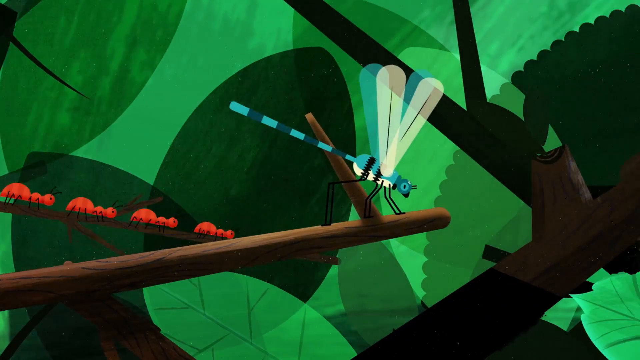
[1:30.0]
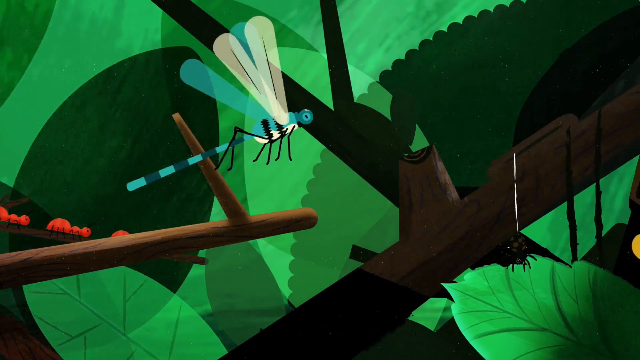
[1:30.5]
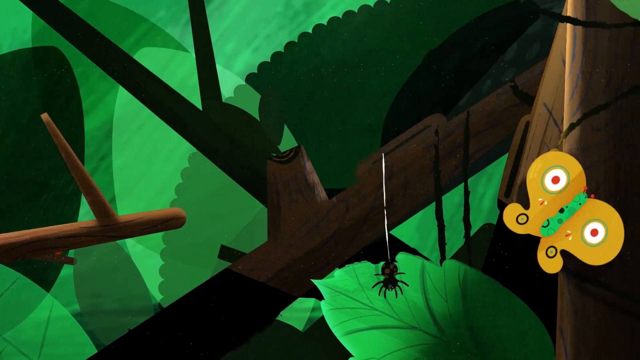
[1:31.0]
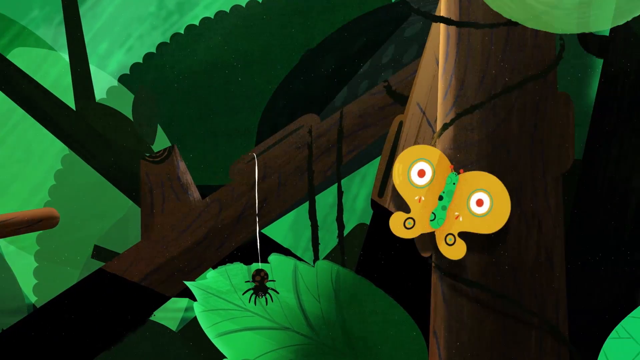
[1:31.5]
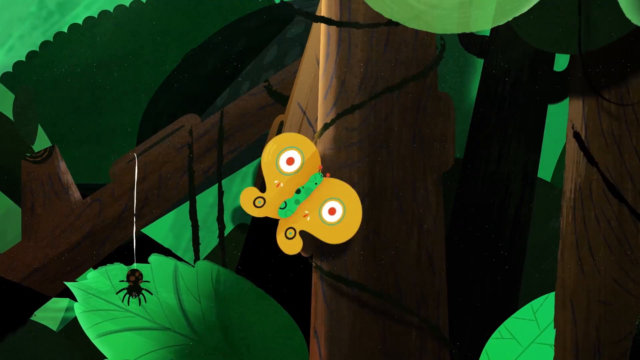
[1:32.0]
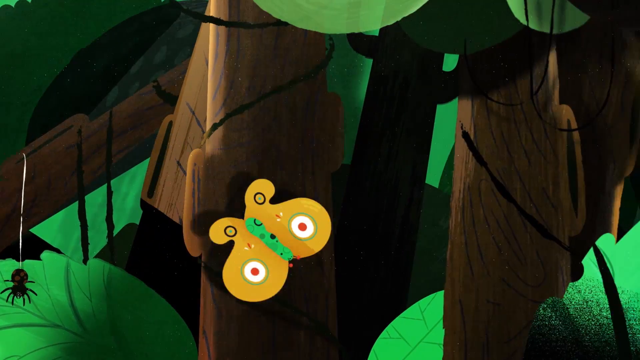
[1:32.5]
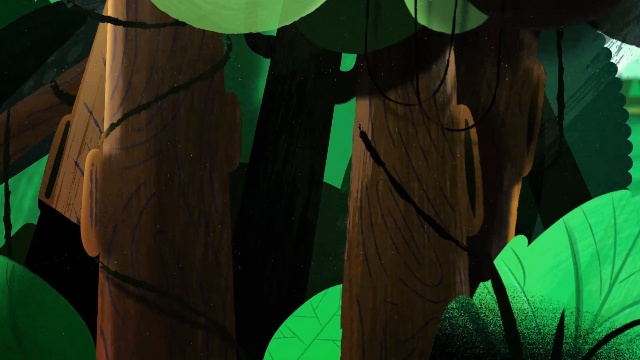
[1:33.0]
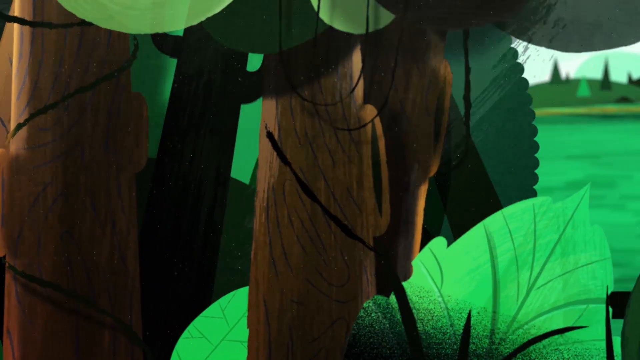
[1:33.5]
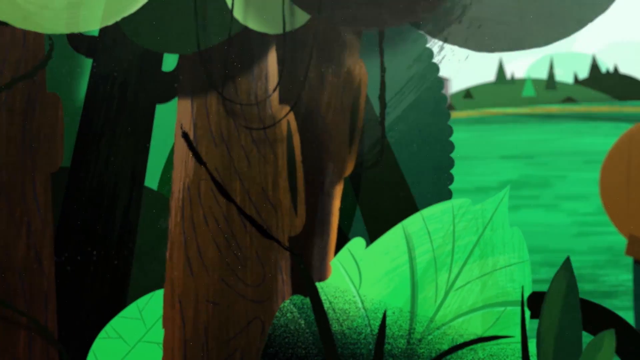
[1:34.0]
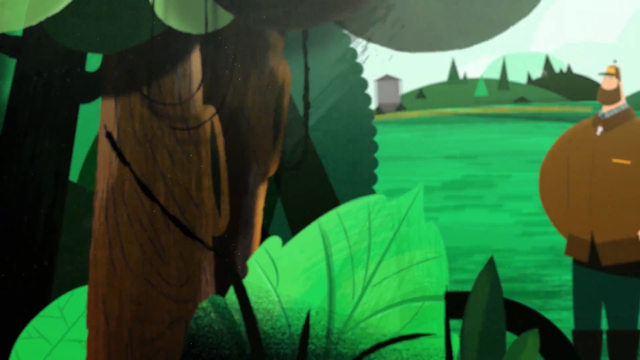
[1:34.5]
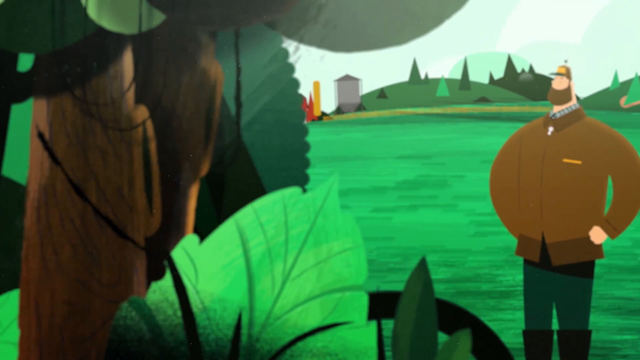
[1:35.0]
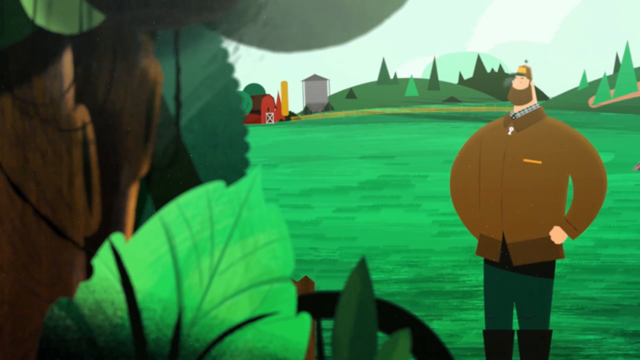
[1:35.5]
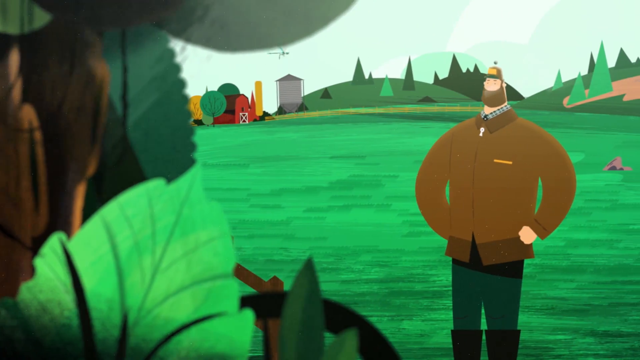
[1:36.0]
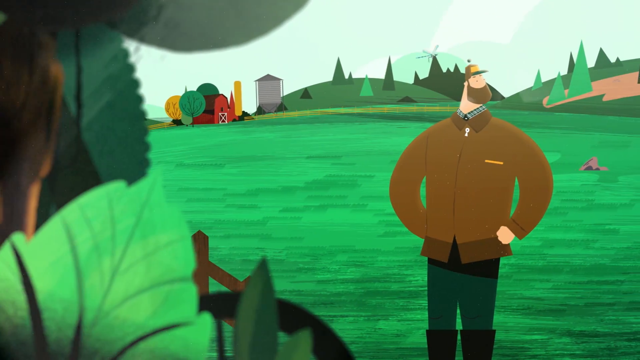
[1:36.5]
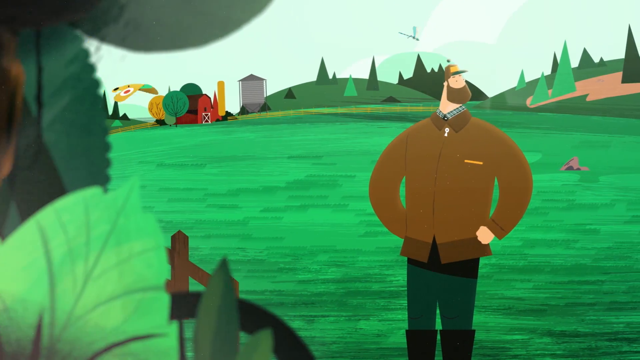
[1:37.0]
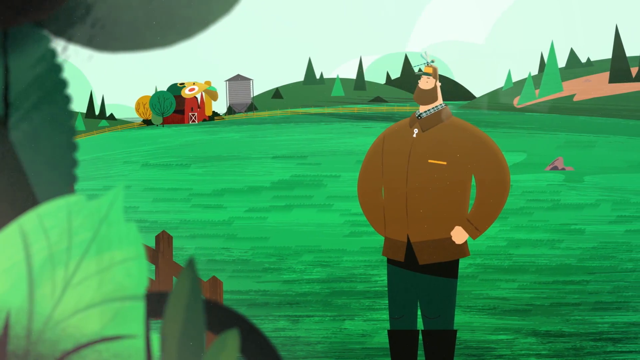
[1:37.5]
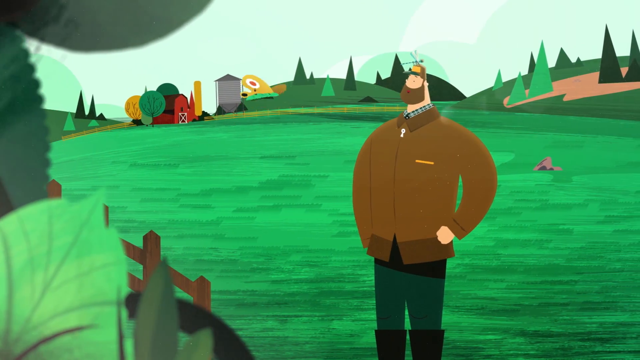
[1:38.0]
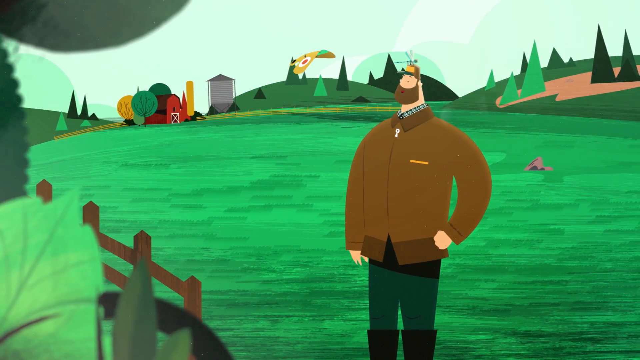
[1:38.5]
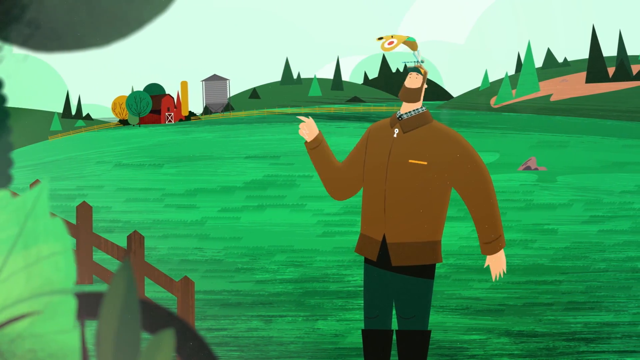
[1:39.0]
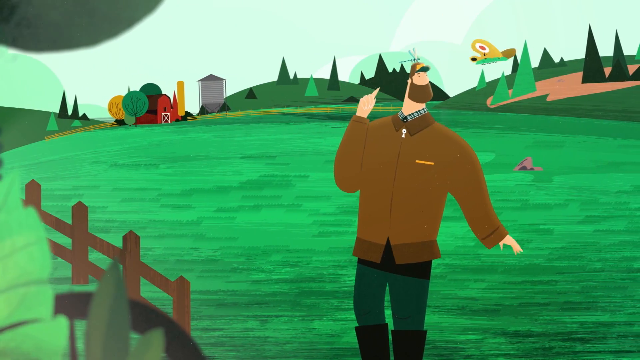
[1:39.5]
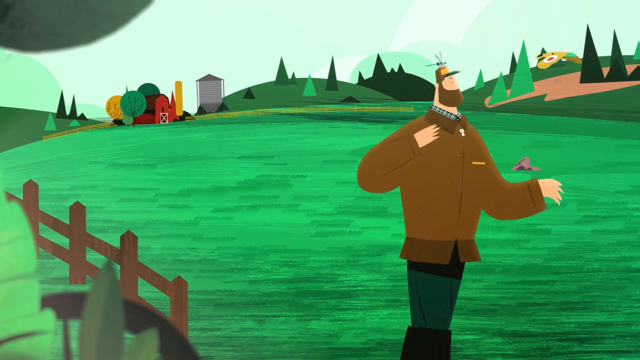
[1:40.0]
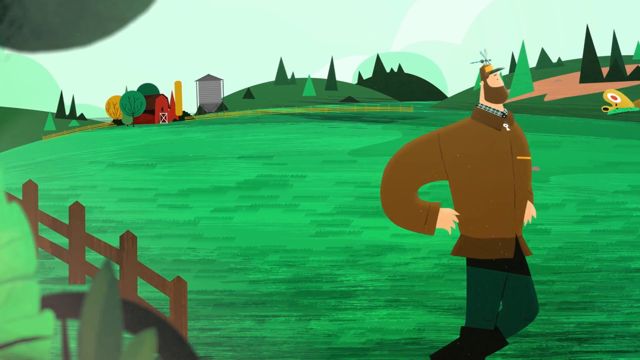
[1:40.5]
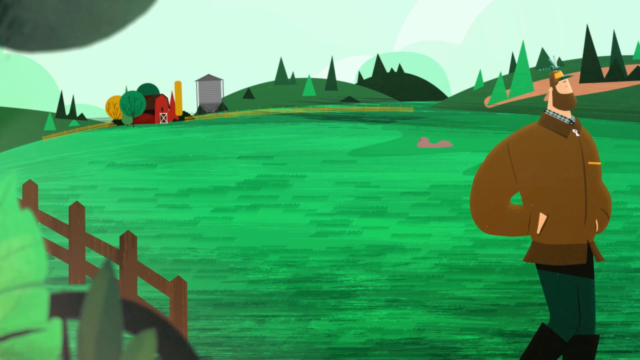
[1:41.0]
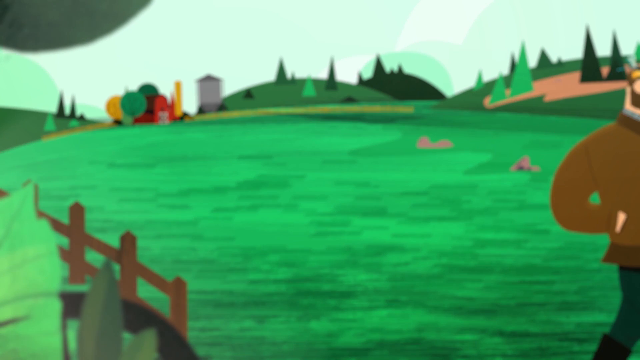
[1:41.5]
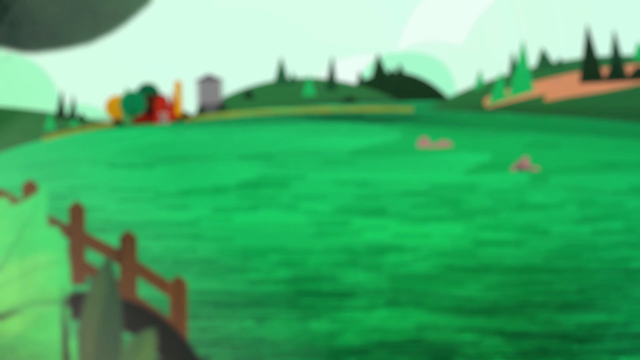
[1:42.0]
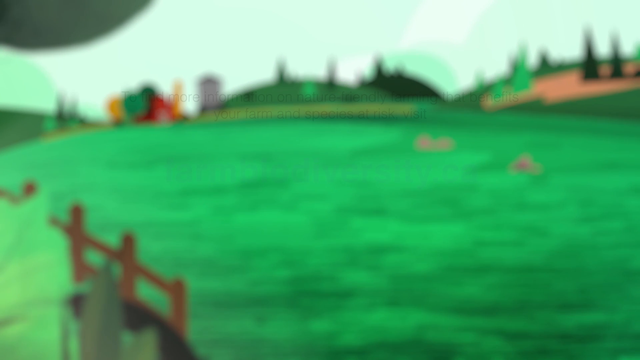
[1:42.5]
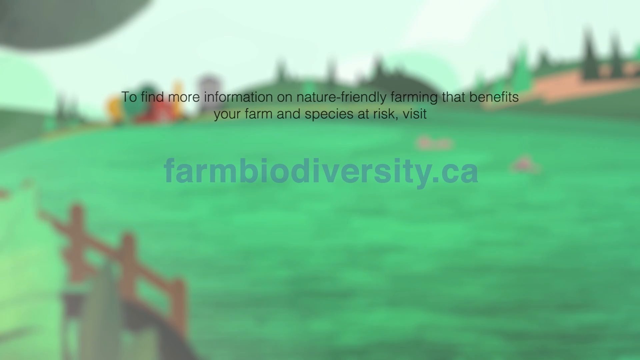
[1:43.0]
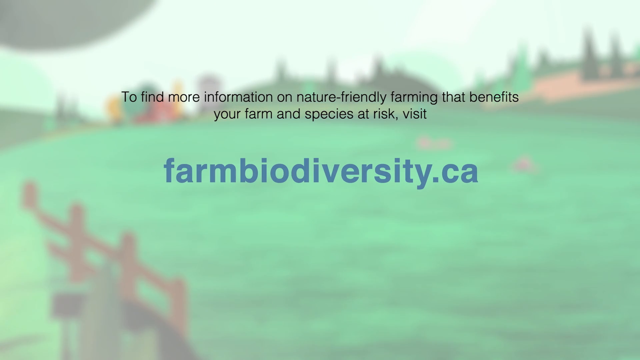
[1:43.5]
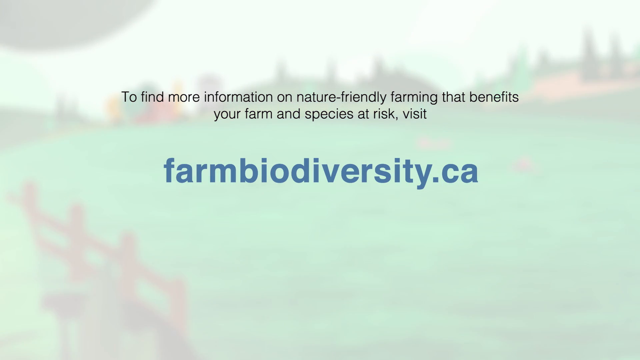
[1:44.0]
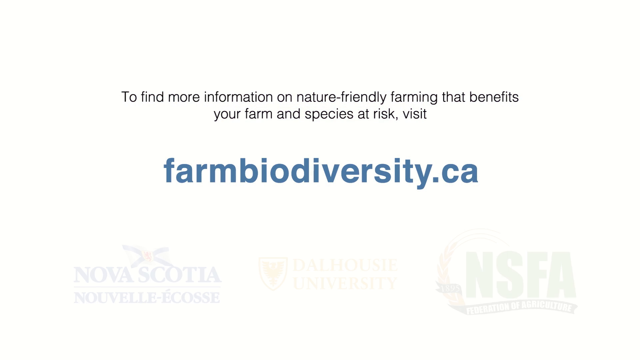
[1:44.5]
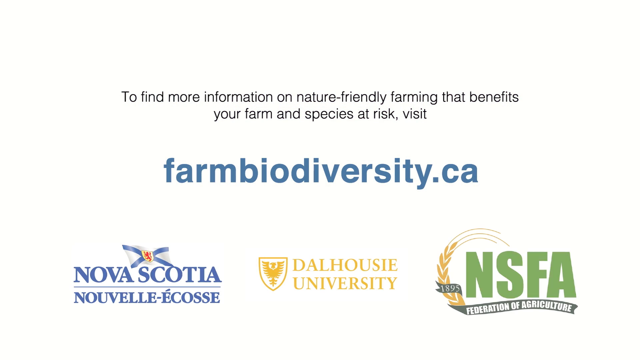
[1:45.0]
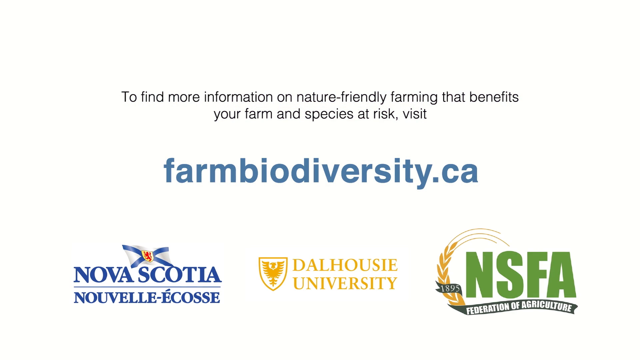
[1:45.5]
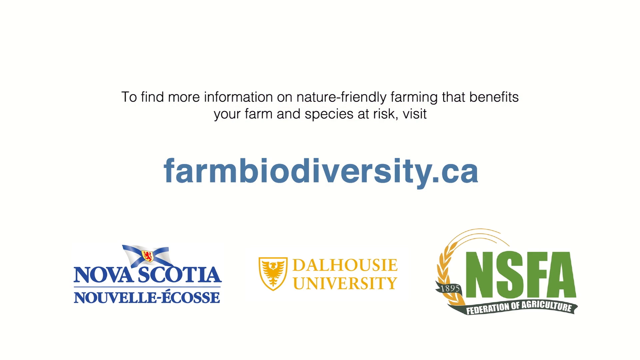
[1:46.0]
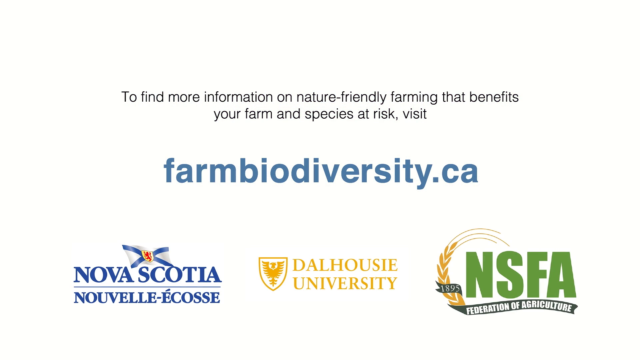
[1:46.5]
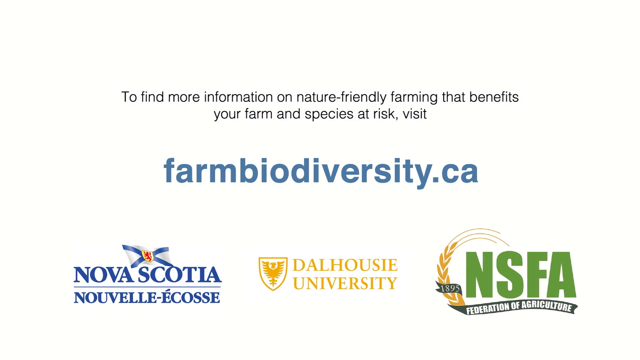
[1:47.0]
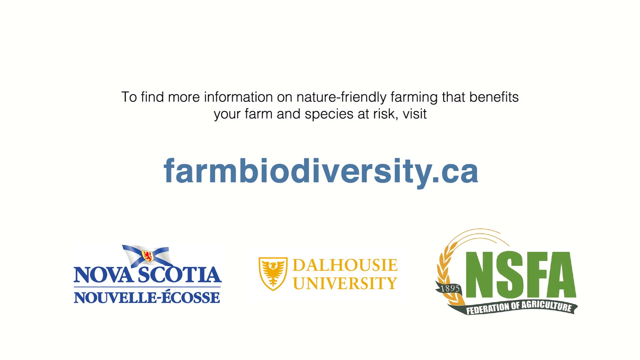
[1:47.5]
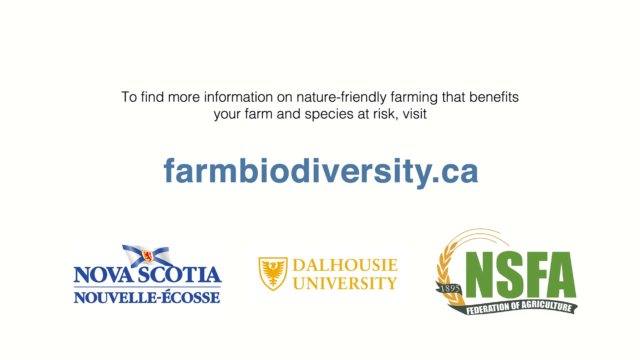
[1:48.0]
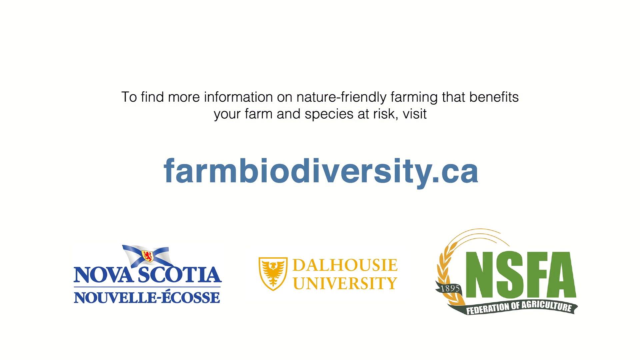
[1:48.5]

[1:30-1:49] Red ants go down a twig, a firefly flies off a twig, a spider hangs down from its little web, and a yellow butterfly flaps in the wind, all in a pan from left to right. The pan reveals the man standing in the center of an open field area with his hands on his hips, looking around, seemingly proud. The butterfly flies out and above him, and he follows it toward the right side of the screen with his hands kind of in his pockets, walking off screen. The footage goes a bit blurry, and a title card appears that says "to find more information on nature-friendly farming that benefits your farm and species at risk visit farmbiodiversity.ca".